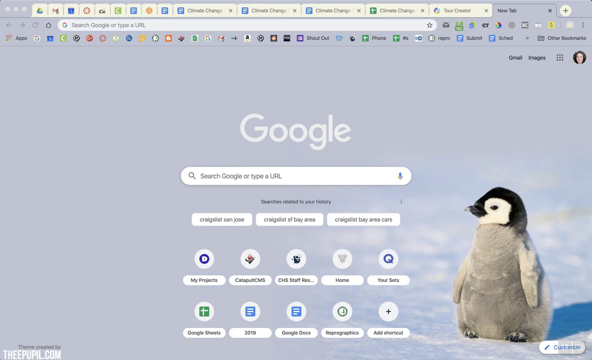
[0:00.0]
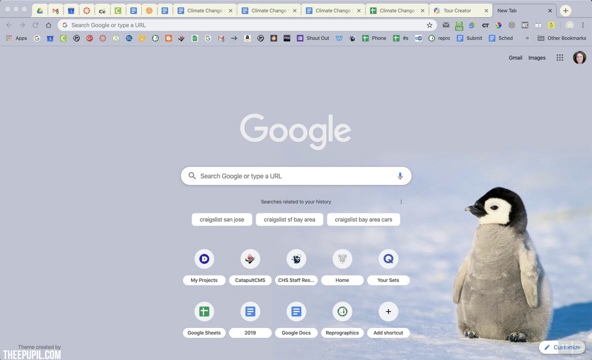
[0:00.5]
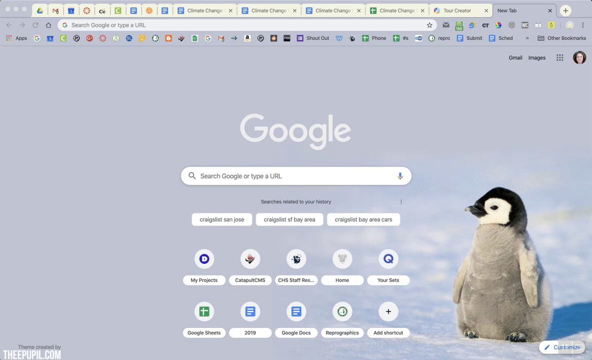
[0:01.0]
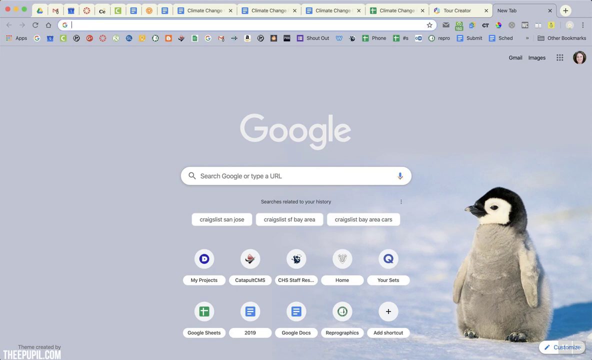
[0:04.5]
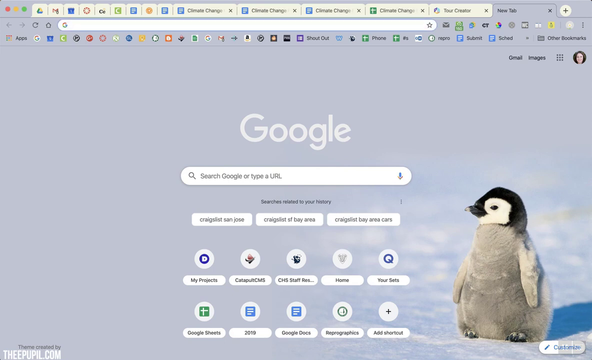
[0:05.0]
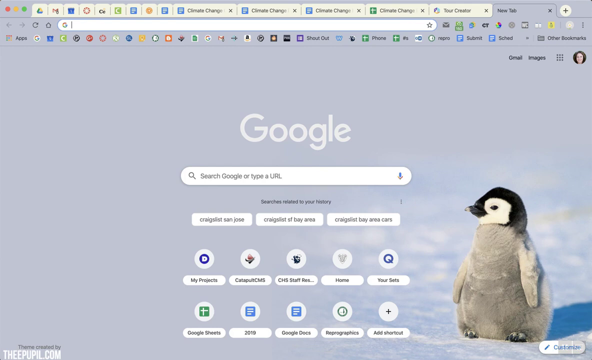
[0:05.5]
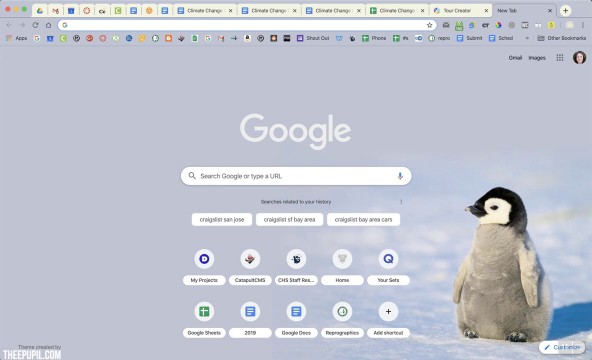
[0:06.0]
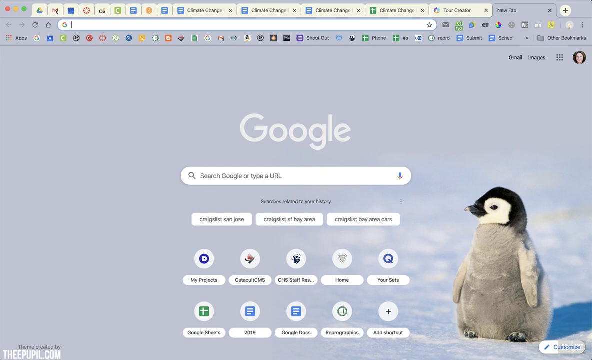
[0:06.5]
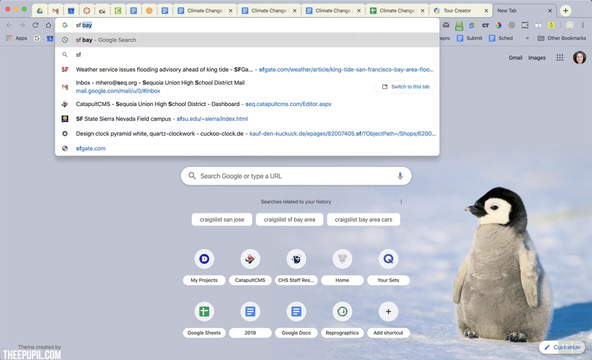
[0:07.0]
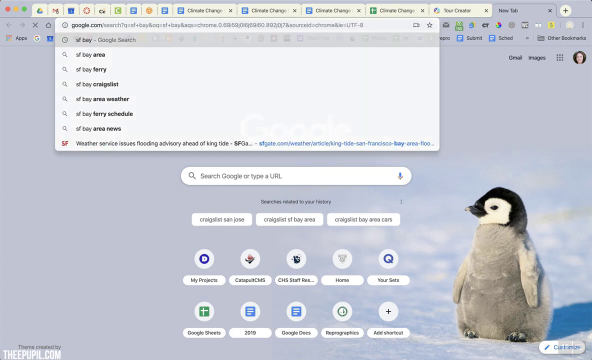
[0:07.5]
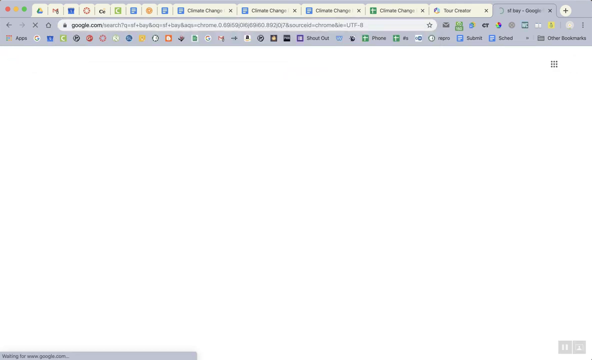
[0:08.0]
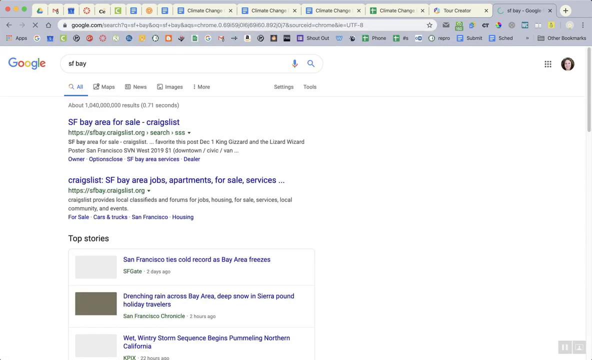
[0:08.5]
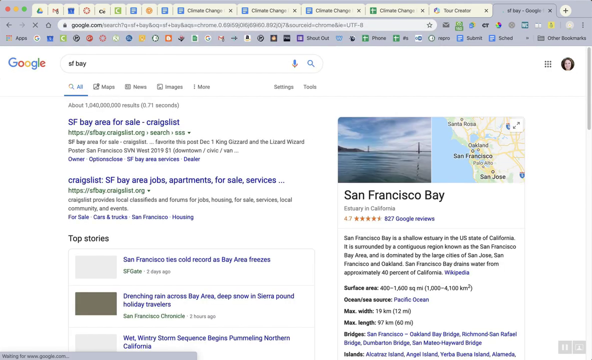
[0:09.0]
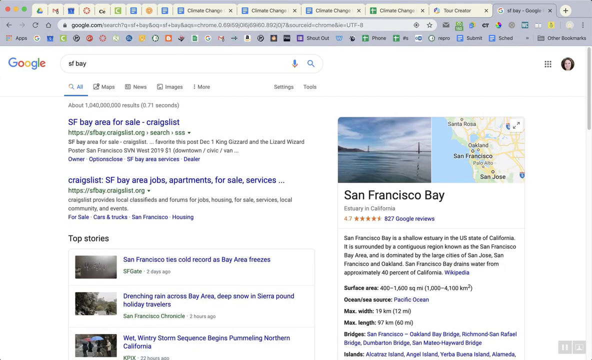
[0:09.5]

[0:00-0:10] A Google Chrome window is on screen with a lot of tabs open, though the current one is a new, completely empty tab. The browser also has a bunch of bookmarks. The page shows a Google search box with search-history suggestions reading "Craigslist San Jose," "Craigslist SF Bay Area" and "Craigslist Bay Area Cars." Below these are other links, including "My Projects," one beginning with "Catapult," "CHS Staff," "Home," "Your Sets," "Google Sheets," "2019" and "Google Docs." At the top right is an account avatar image of someone, and the Google account appears to belong to a woman. On the right is a picture of a penguin in snow. The user types "sf bay" into the URL bar at the top, and Google search results for sf bay load.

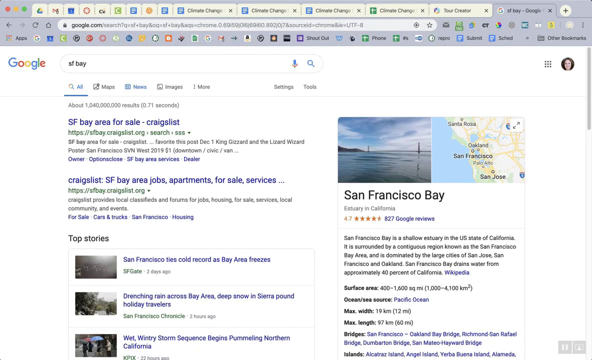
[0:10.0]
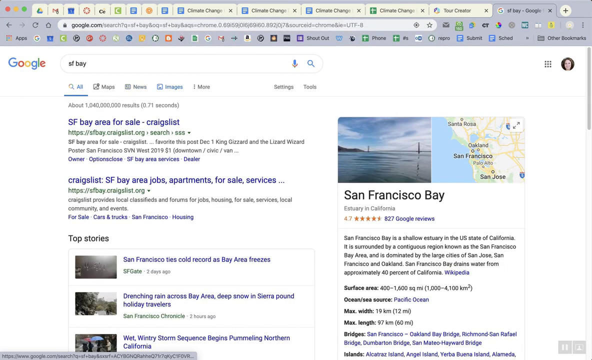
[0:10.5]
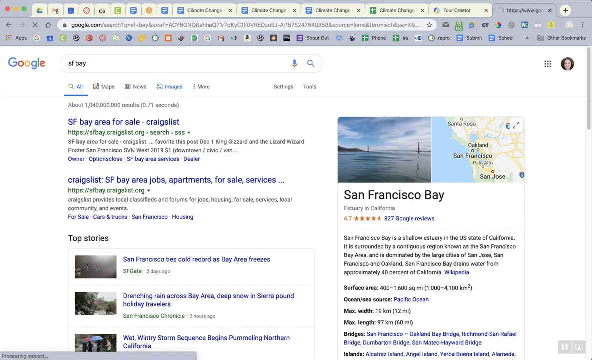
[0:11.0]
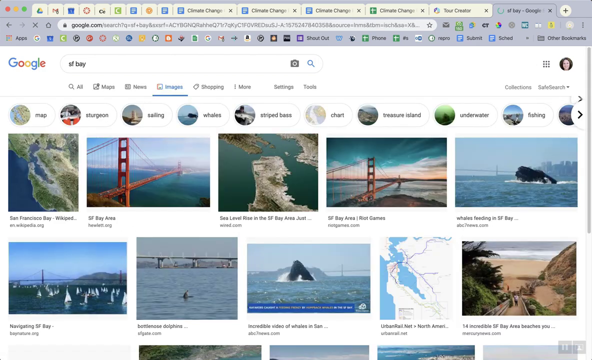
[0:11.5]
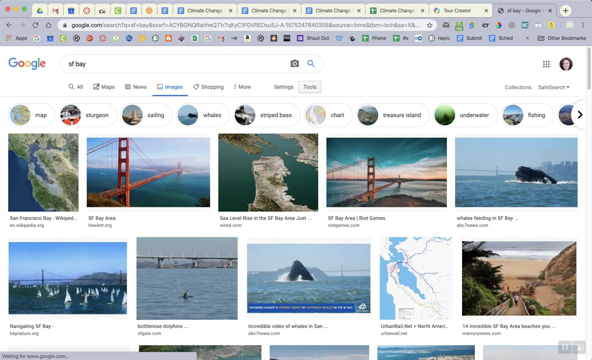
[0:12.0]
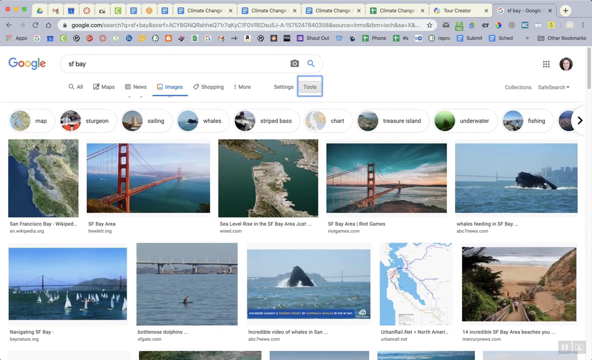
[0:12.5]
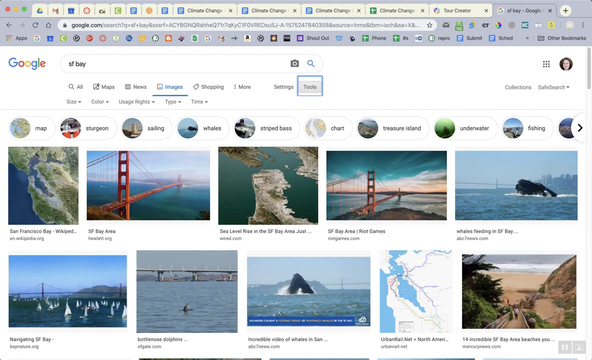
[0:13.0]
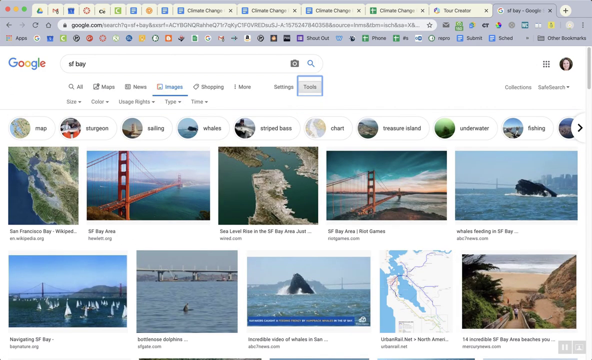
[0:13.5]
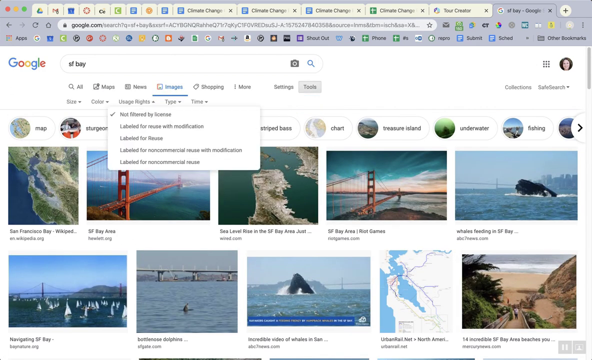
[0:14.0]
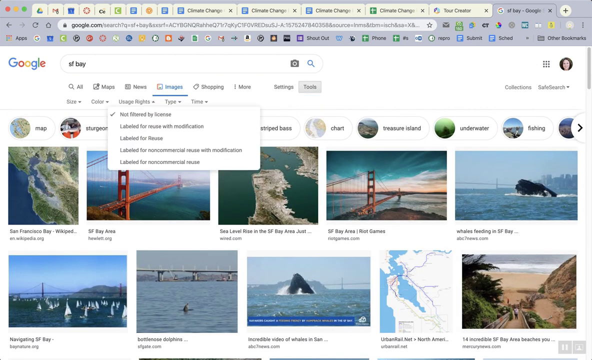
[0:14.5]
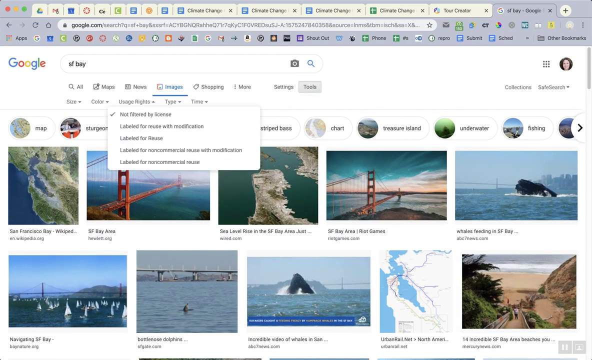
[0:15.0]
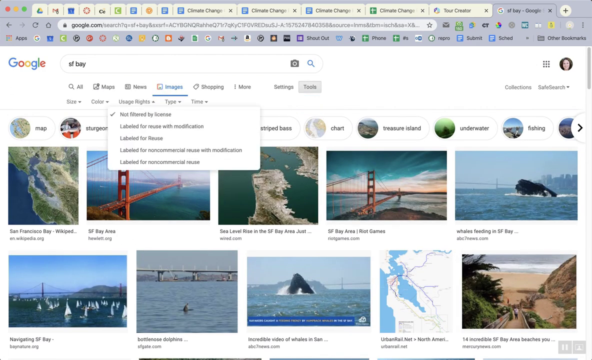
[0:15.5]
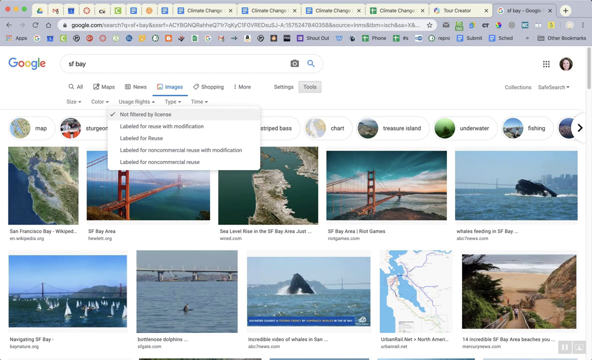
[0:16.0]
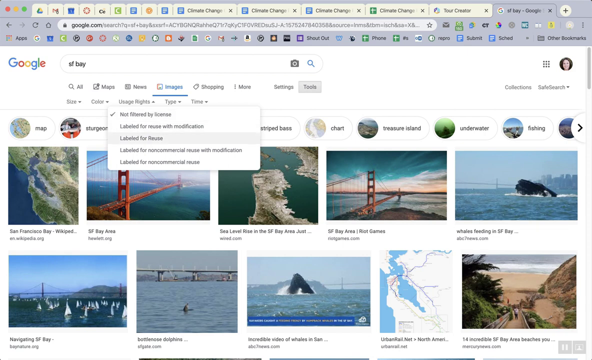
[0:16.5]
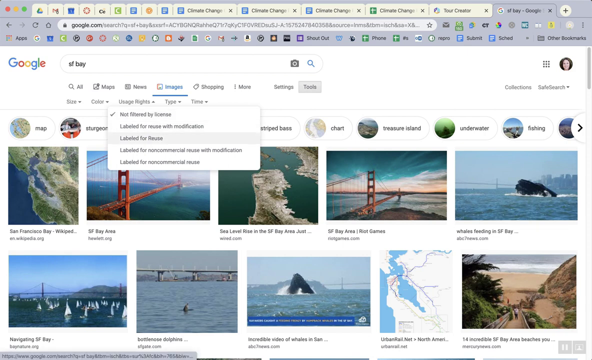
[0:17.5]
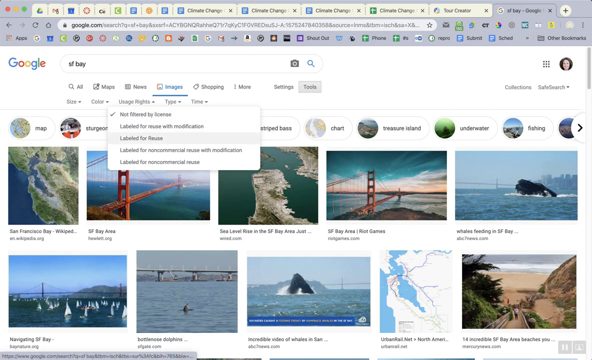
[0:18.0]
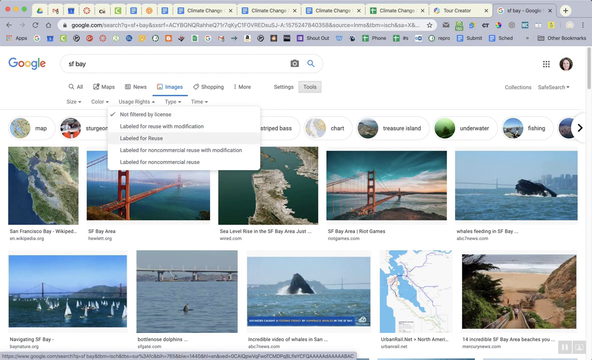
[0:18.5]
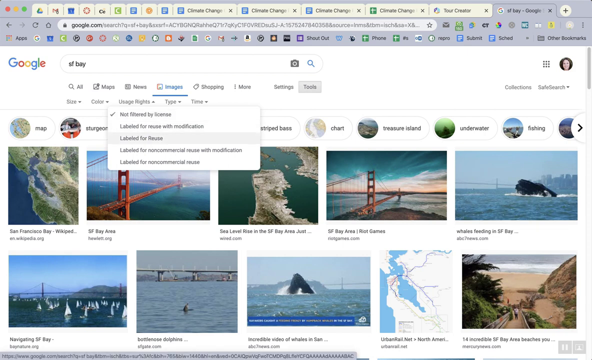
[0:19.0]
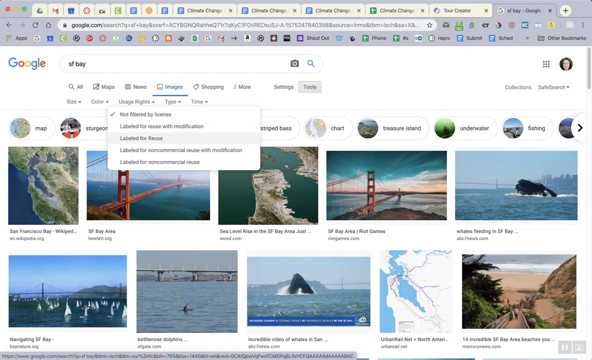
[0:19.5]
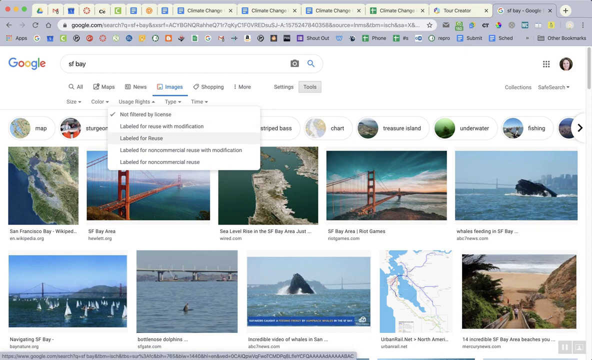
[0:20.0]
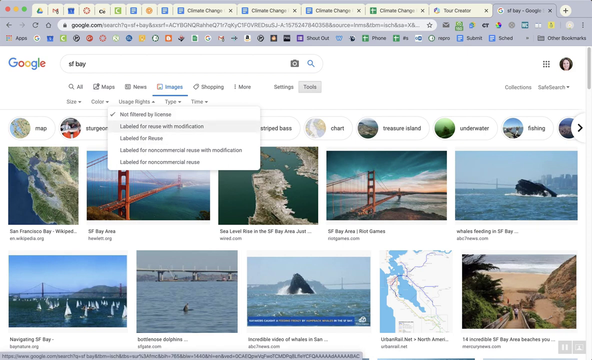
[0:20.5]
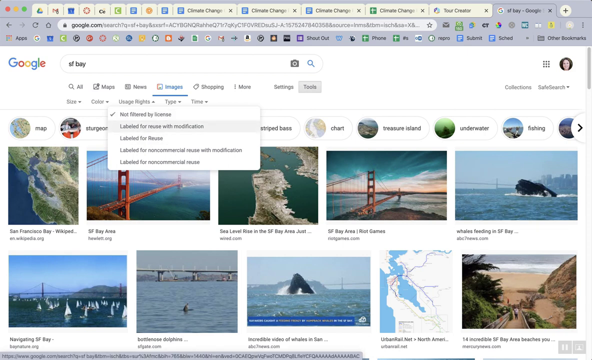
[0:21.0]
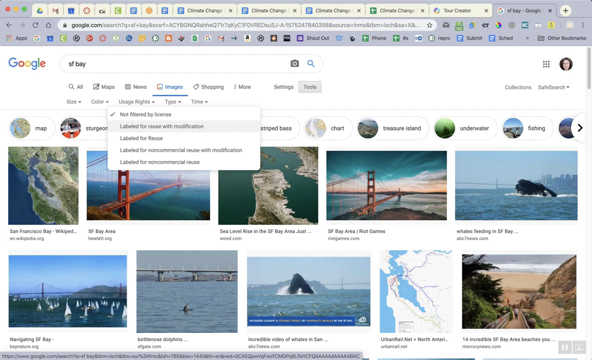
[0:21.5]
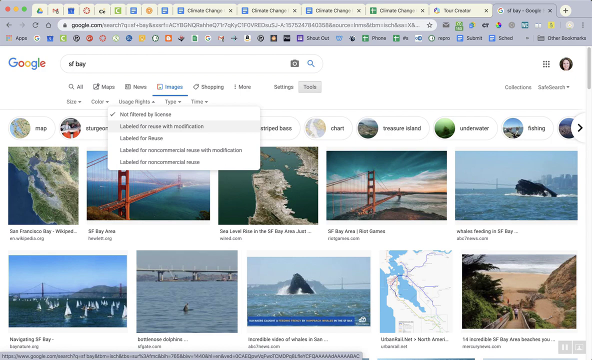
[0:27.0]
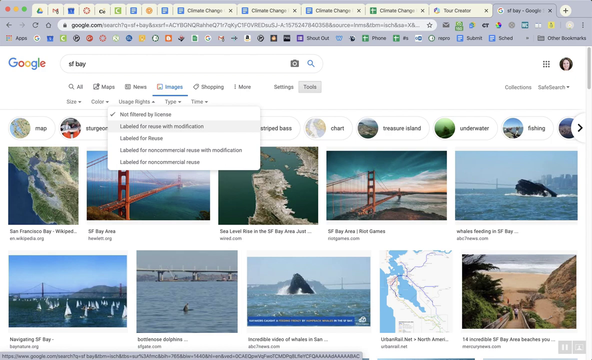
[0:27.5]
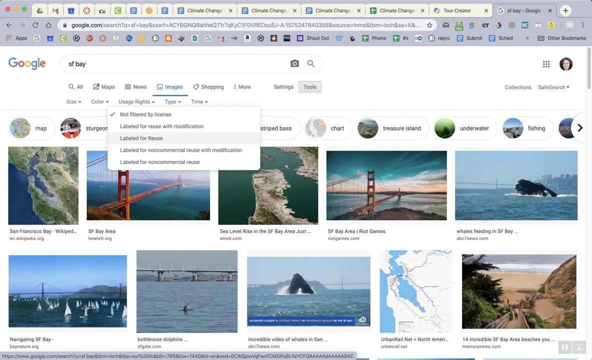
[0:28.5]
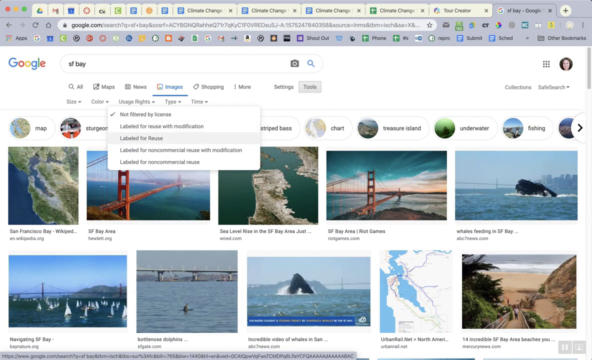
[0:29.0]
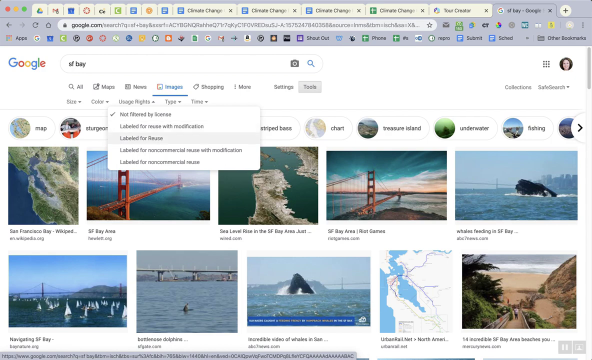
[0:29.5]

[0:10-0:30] With the SF Bay results loaded, the top of the page shows the tabs All, which is selected by default, followed by Maps, News, Images, Shopping and More. The user clicks Images, and various images of San Francisco Bay appear, including the San Francisco Bridge, an overhead map of the bay, and the sea part of the bay. Right below the Images selection at the top is a row of further filters: size, color, usage rights, type and time. The user clicks usage rights, which displays a list of license filters. The top one, "not filtered by license," is the default, and below it are "labeled for reuse with modification," "labeled for reuse," "labeled for non-commercial reuse with modification" and "labeled for non-commercial reuse." The user hovers over the different options.